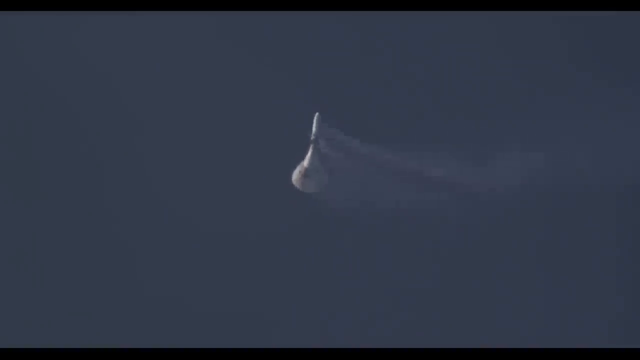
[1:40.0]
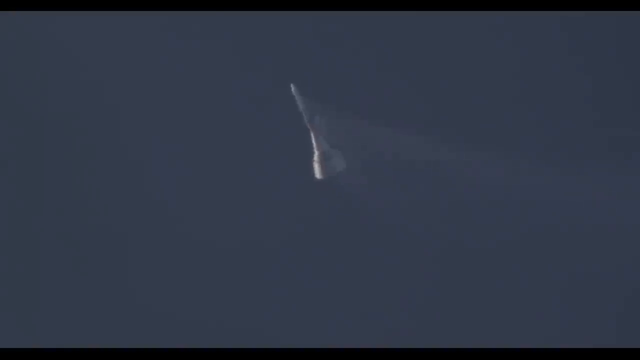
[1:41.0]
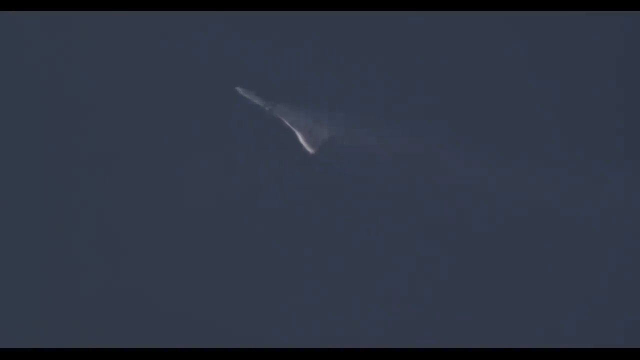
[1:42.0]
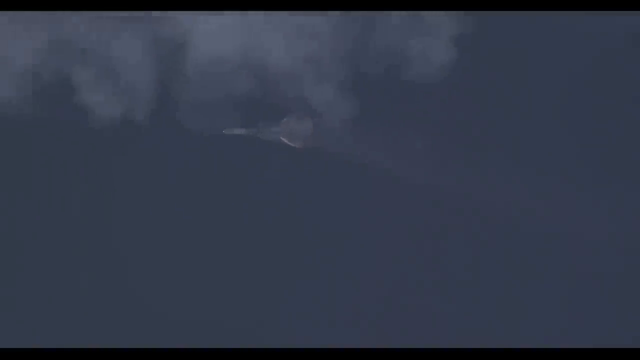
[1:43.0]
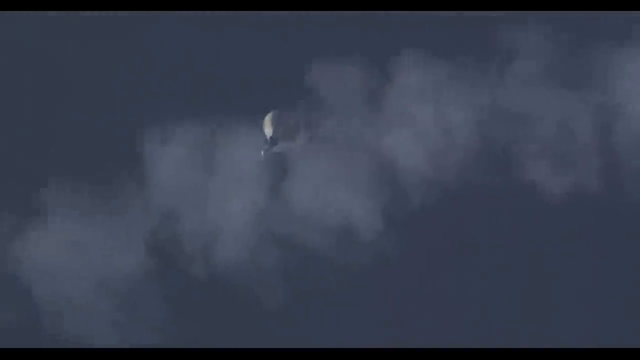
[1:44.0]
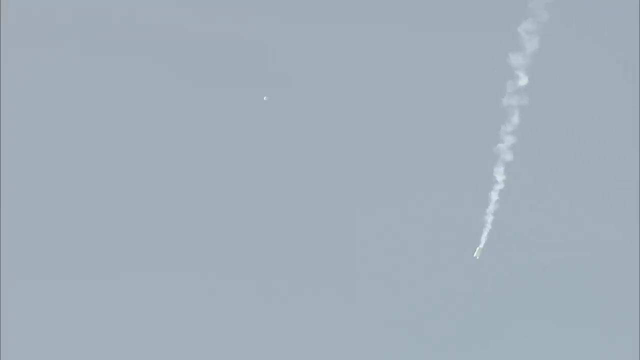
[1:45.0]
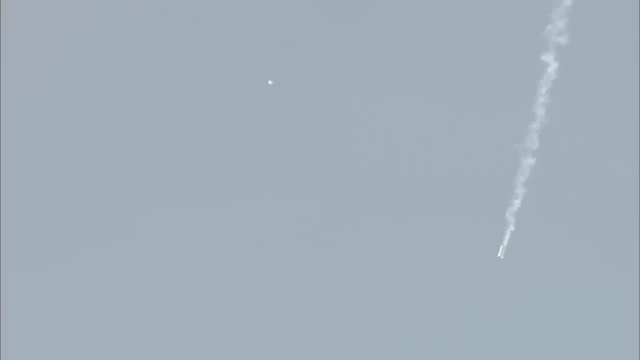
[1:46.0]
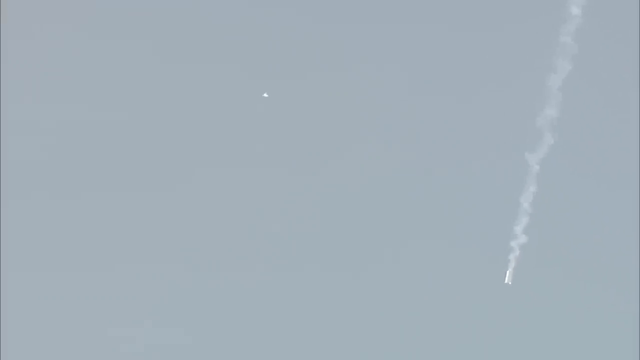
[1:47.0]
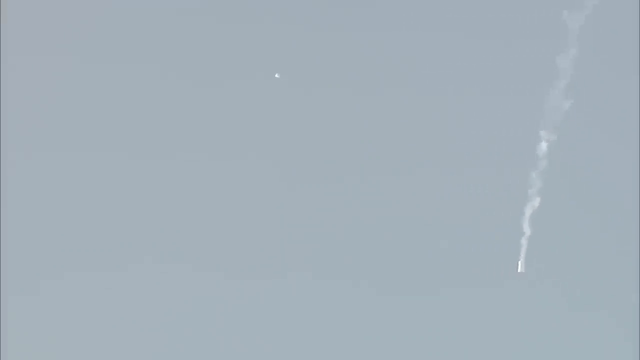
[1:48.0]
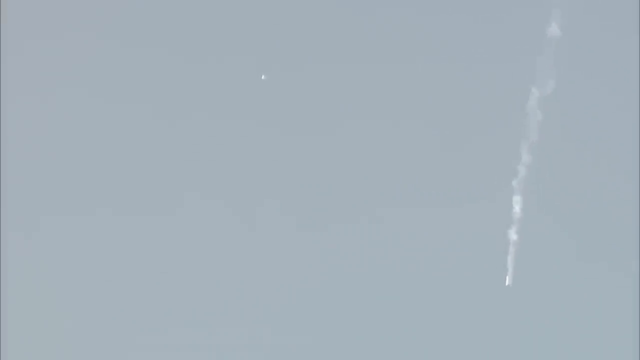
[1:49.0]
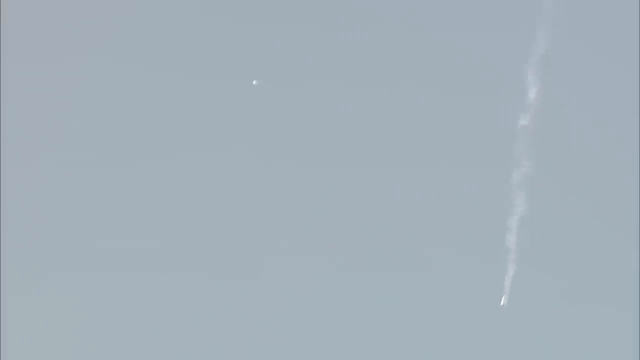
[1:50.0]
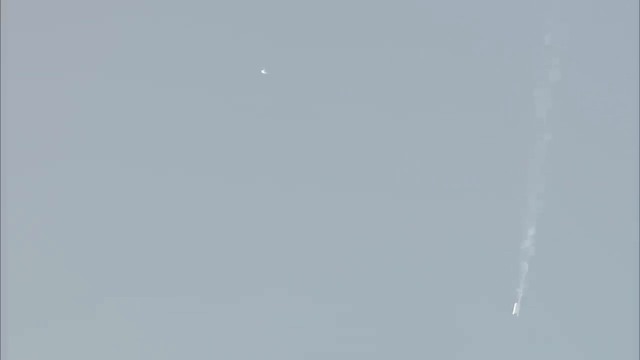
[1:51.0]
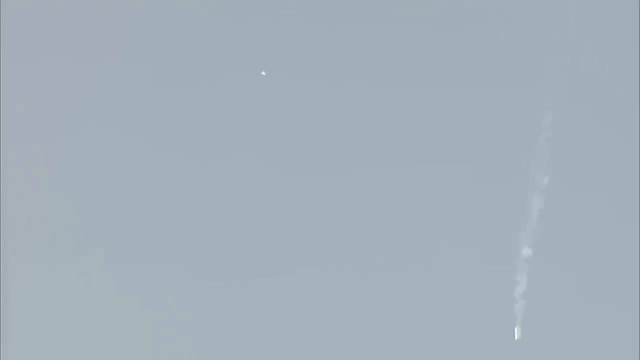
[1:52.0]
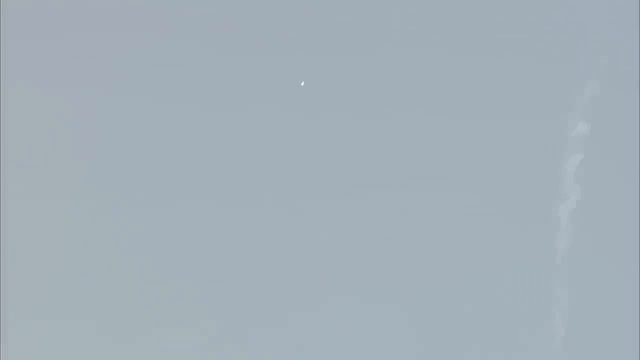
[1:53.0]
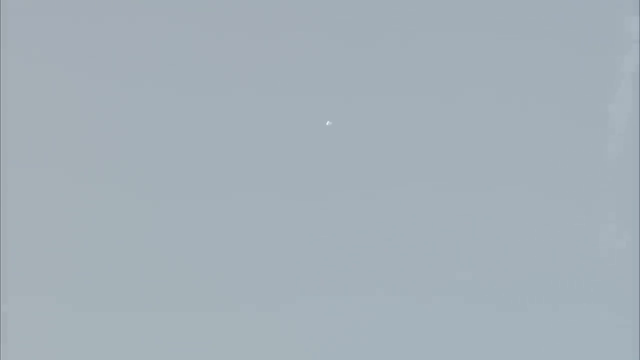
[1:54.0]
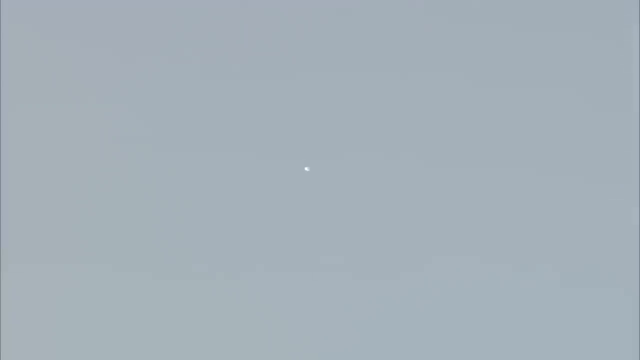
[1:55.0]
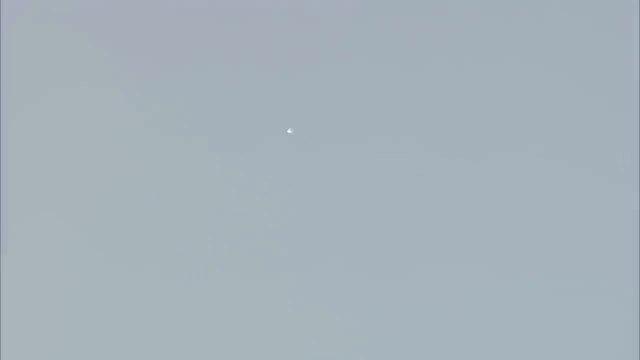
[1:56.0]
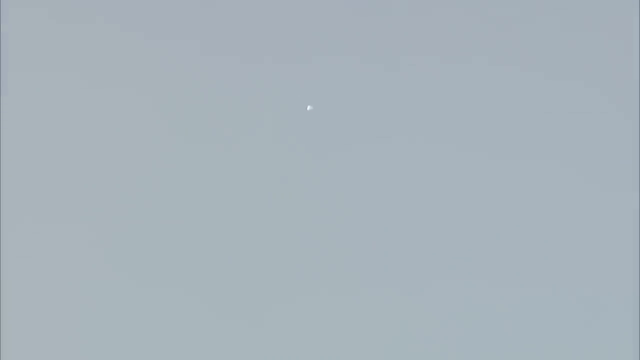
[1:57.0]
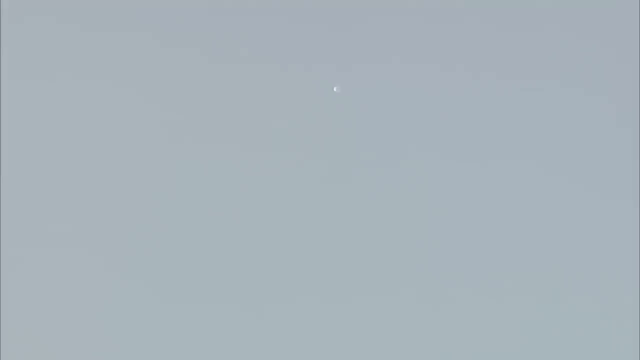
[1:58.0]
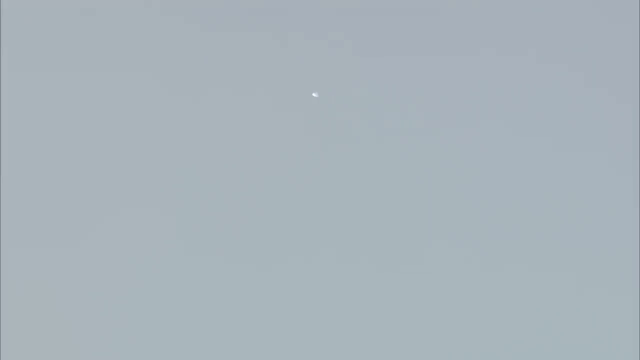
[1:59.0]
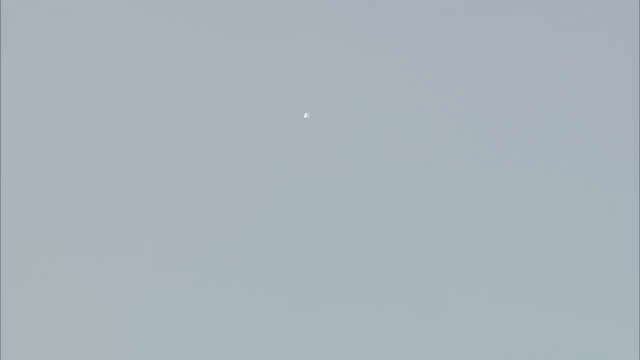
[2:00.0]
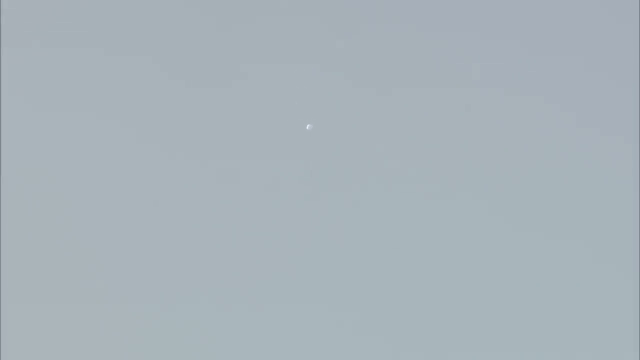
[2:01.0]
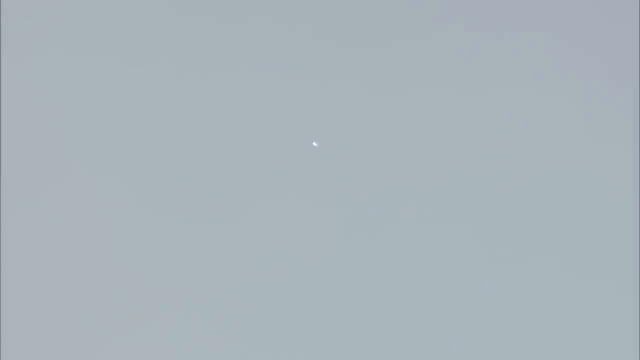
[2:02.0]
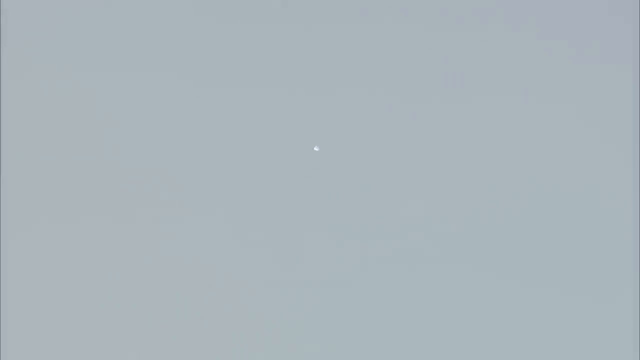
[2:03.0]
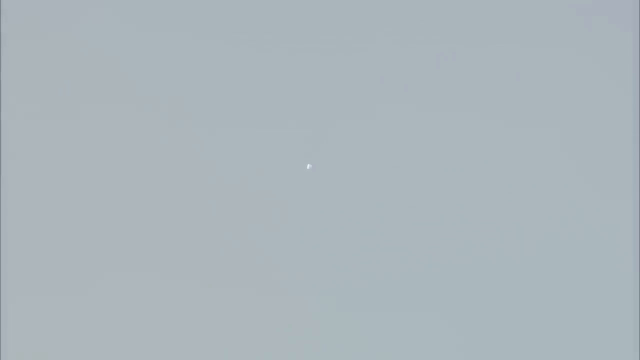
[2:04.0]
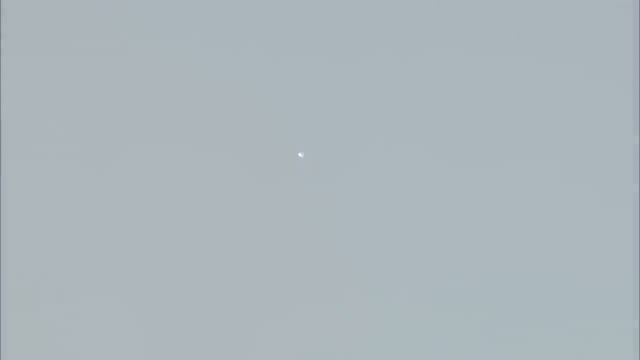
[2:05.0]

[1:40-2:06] The top of the rocket, shaped like a golf tee, flies through the air. It is white and appears to have a small pointy component at the end. It rotates and floats through the sky with smoke trailing from the side and dissipating. It passes a cloud of smoke from the launch, wispy, kind of grayish and transparent, slowly fading in the background. In a faraway shot the component looks like a tiny white dot on the screen. On the right, something else, not clearly identifiable and kind of like a cylinder, hurtles downward, also trailing white smoke that dissipates into the air. Both fall down toward the earth, and the sky looks kind of grayish. The camera focuses on the small component, a tiny white dot slowly moving downward, and then the image fades to black. No people or birds are visible; everything takes place in the sky.